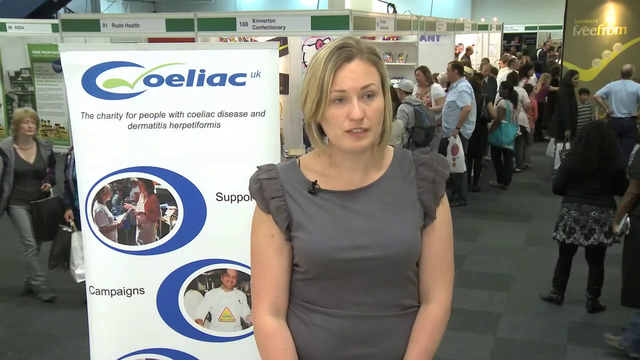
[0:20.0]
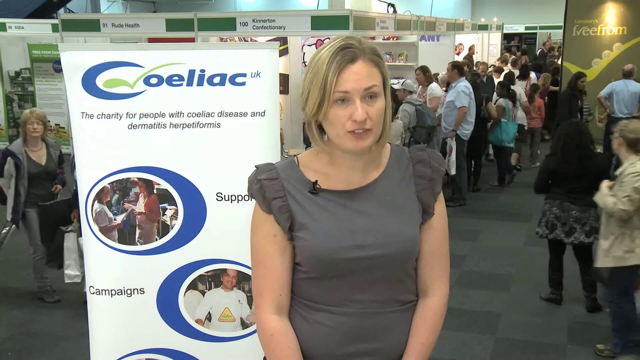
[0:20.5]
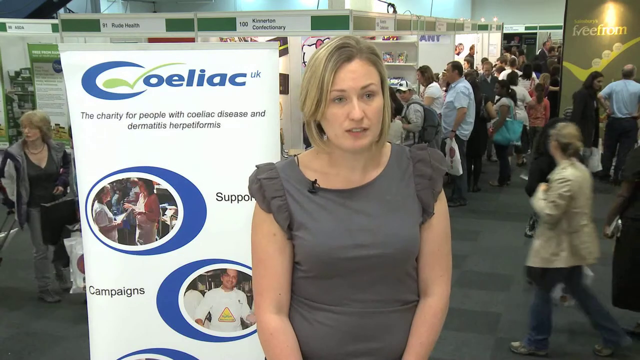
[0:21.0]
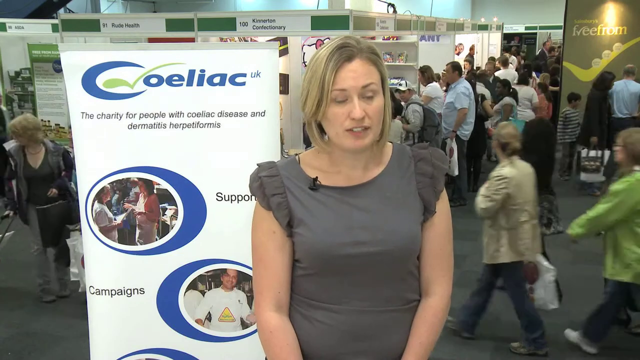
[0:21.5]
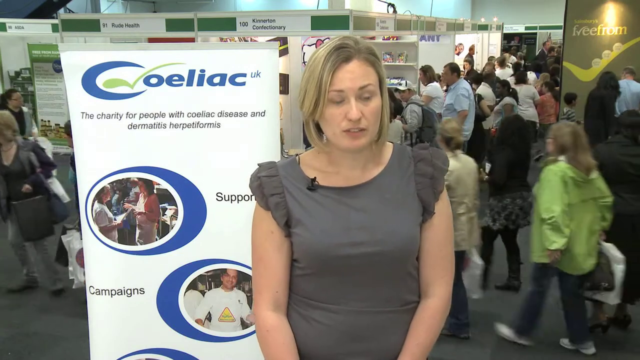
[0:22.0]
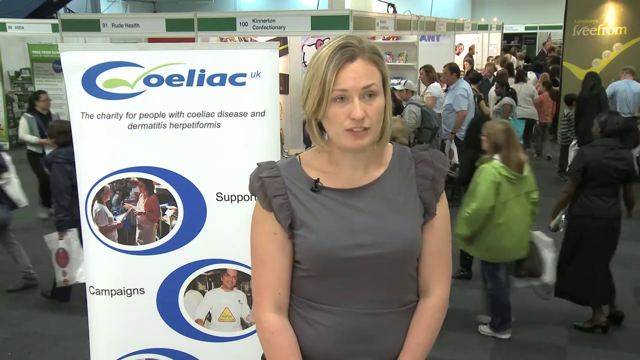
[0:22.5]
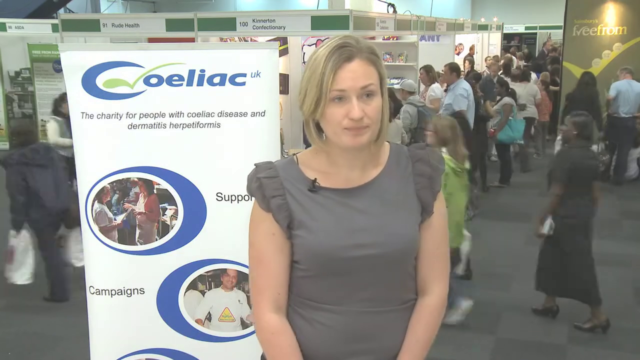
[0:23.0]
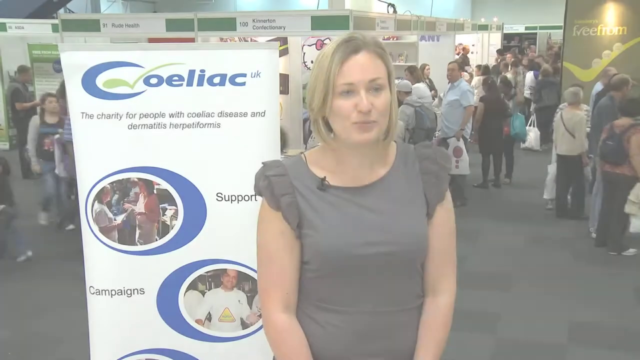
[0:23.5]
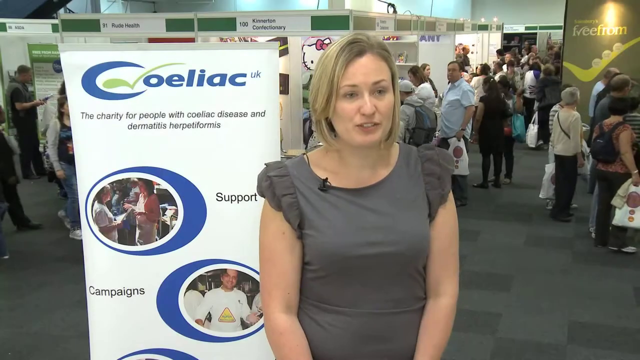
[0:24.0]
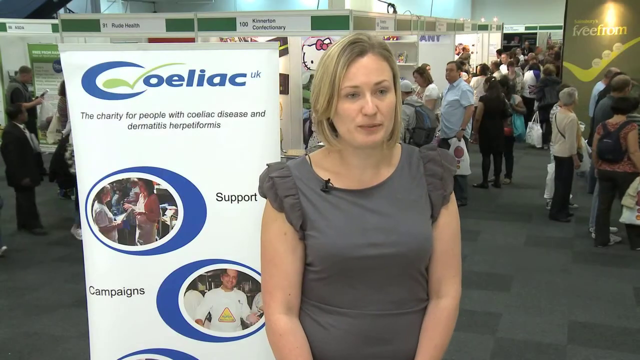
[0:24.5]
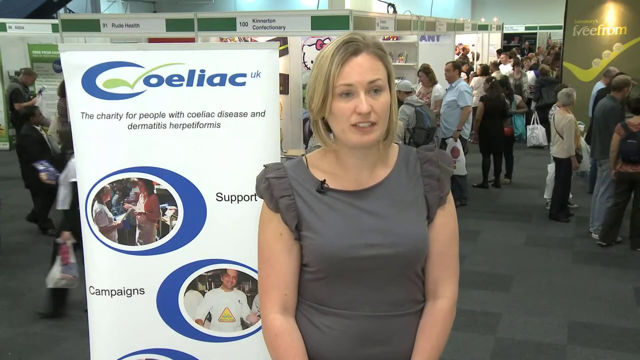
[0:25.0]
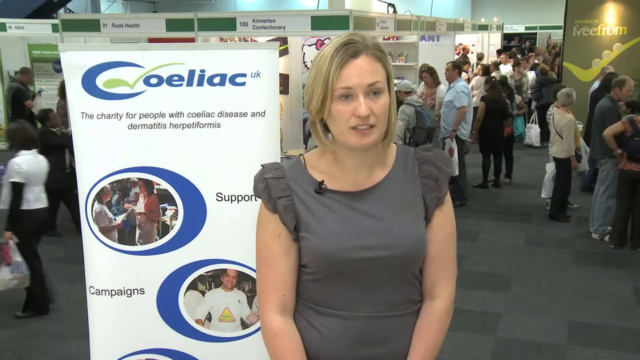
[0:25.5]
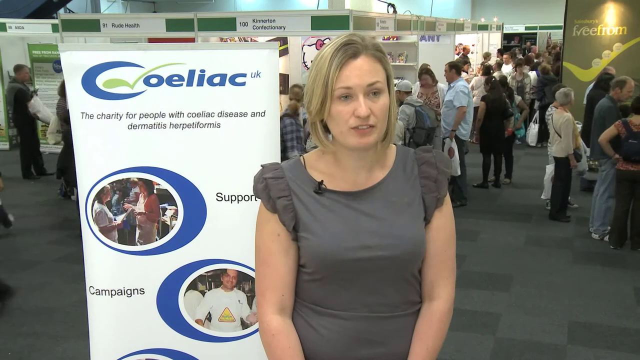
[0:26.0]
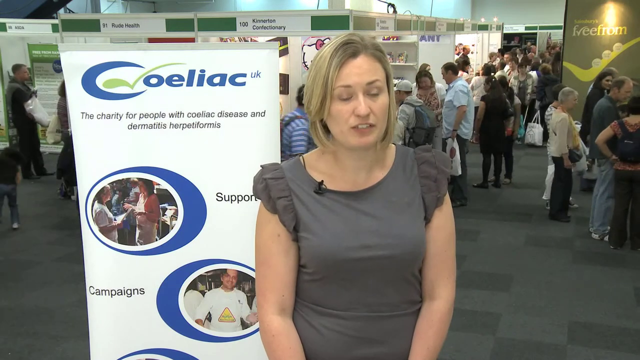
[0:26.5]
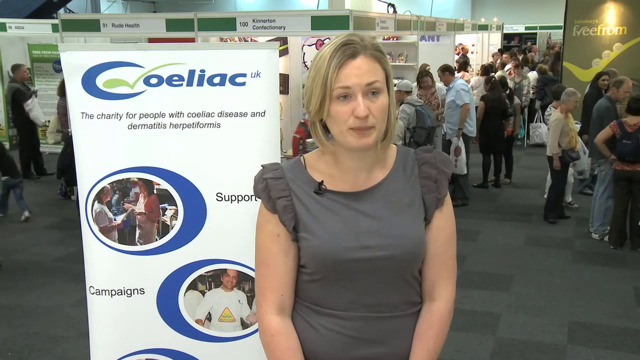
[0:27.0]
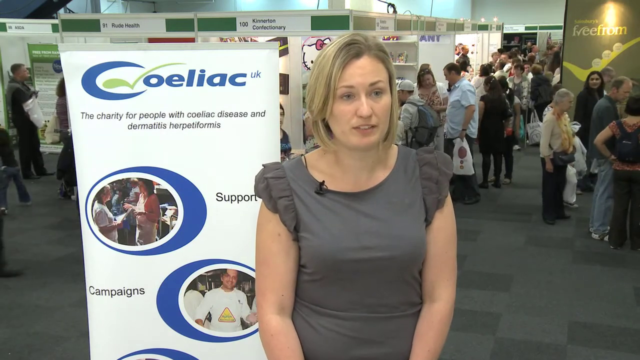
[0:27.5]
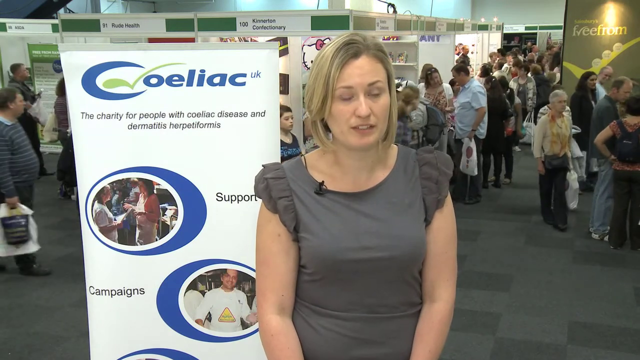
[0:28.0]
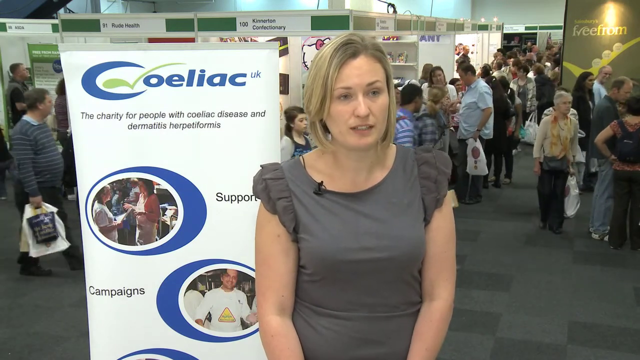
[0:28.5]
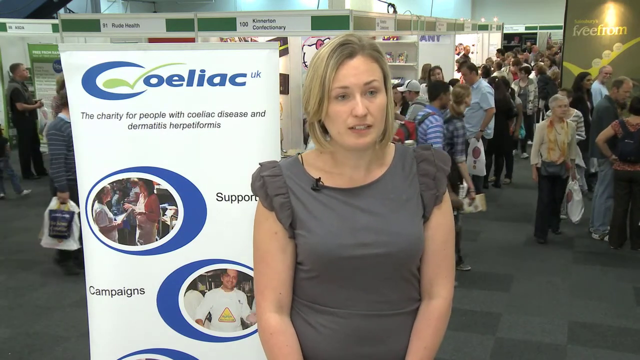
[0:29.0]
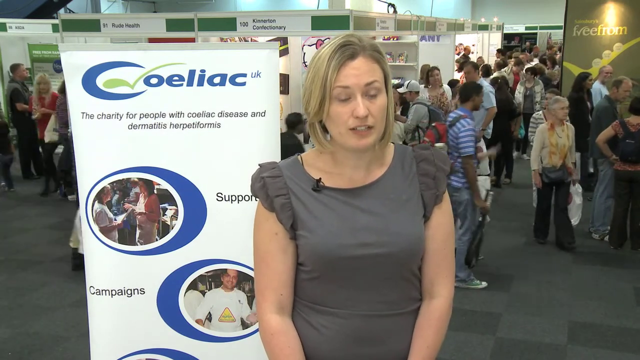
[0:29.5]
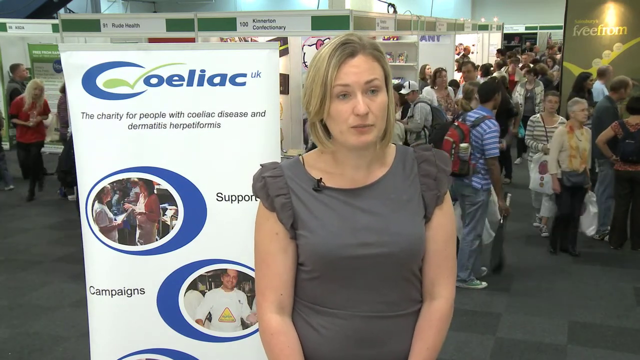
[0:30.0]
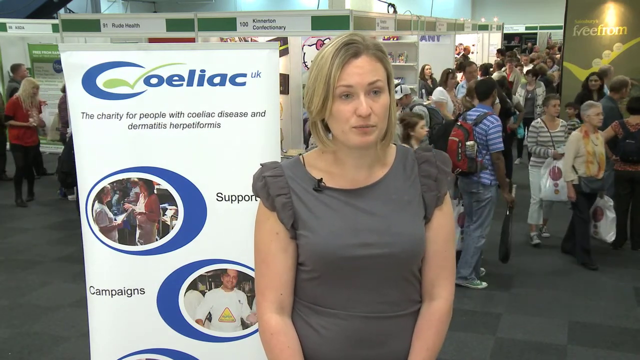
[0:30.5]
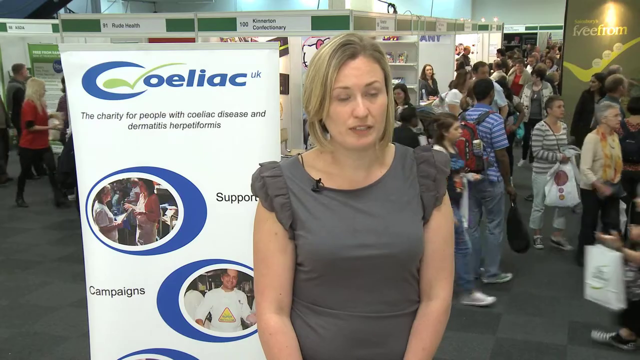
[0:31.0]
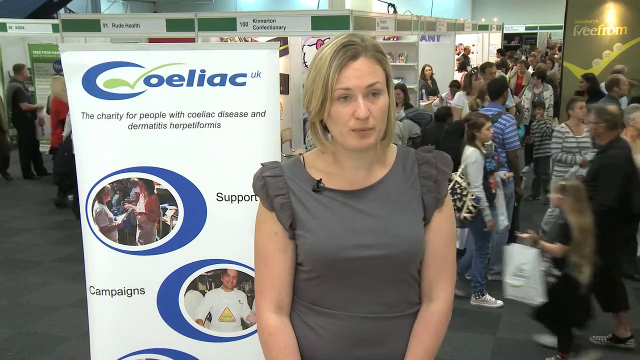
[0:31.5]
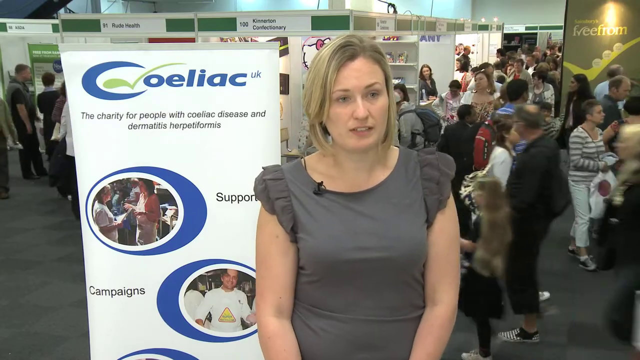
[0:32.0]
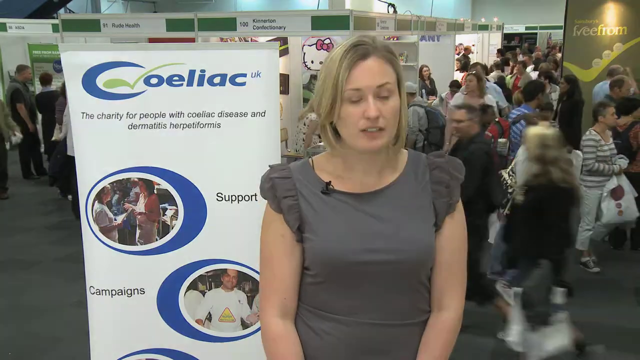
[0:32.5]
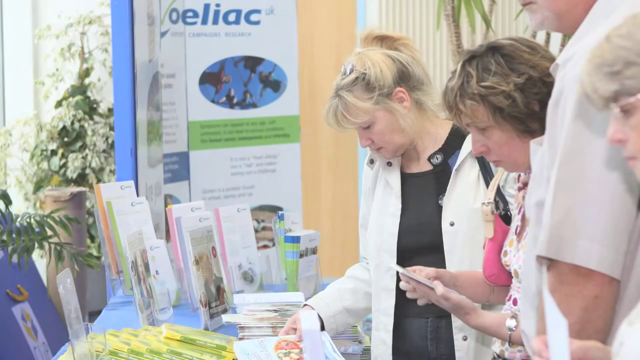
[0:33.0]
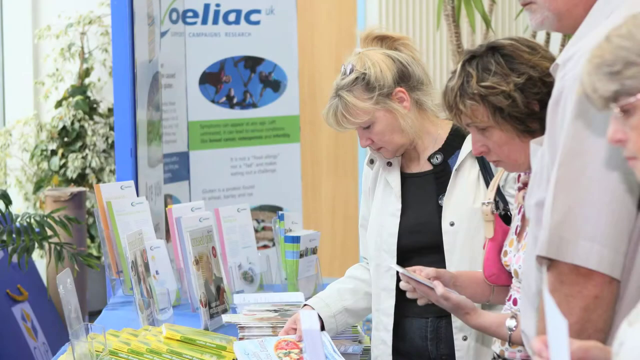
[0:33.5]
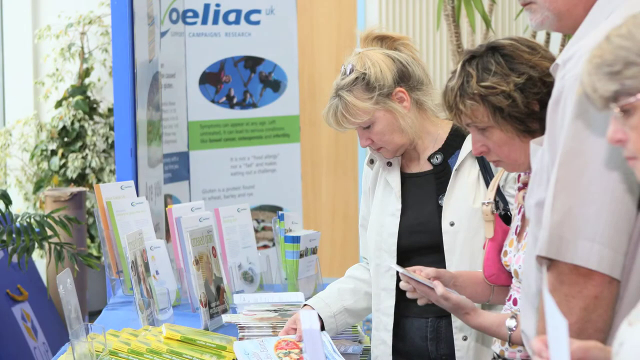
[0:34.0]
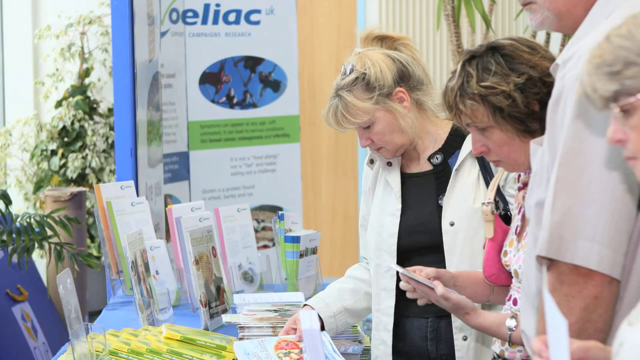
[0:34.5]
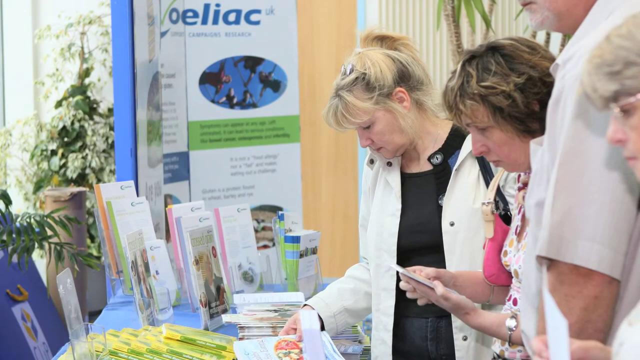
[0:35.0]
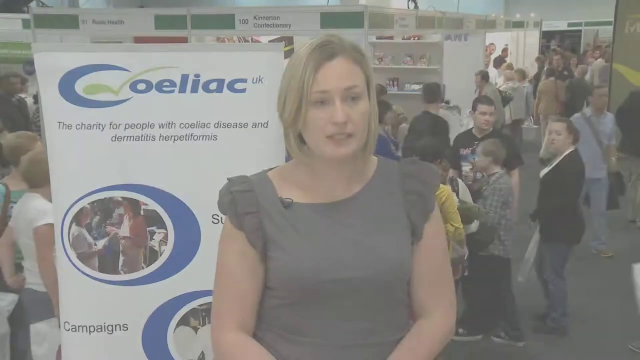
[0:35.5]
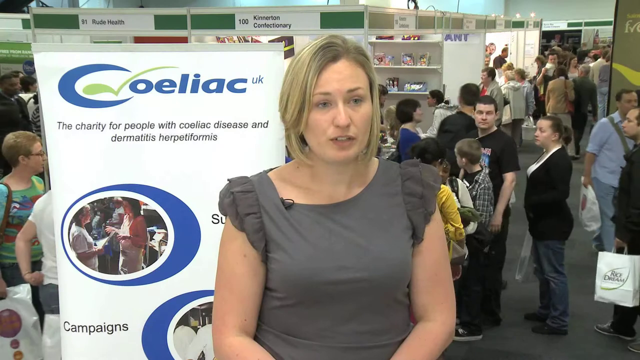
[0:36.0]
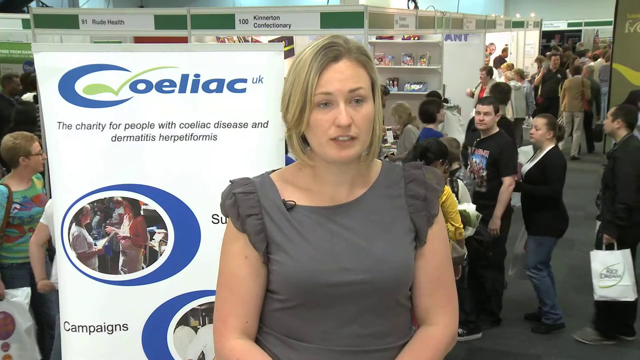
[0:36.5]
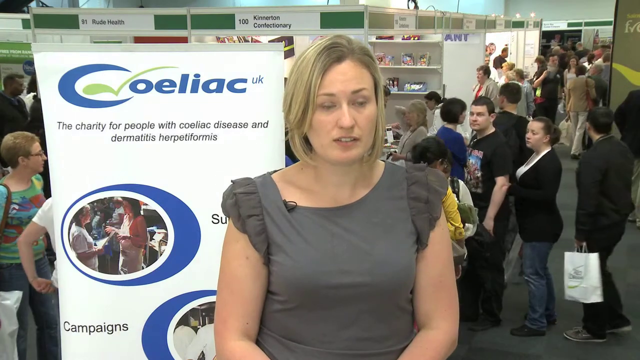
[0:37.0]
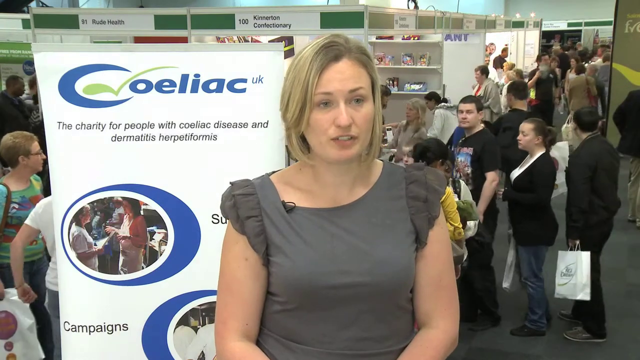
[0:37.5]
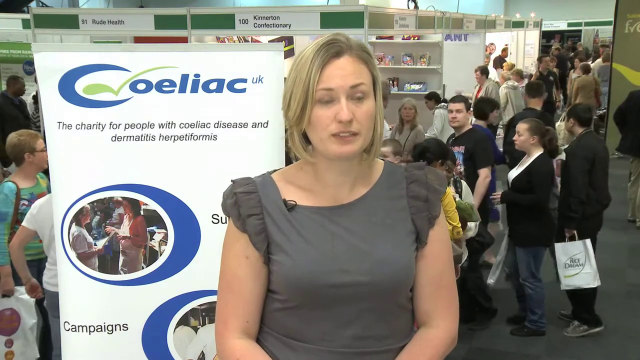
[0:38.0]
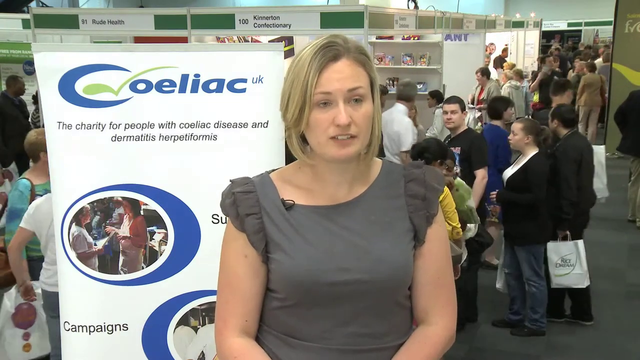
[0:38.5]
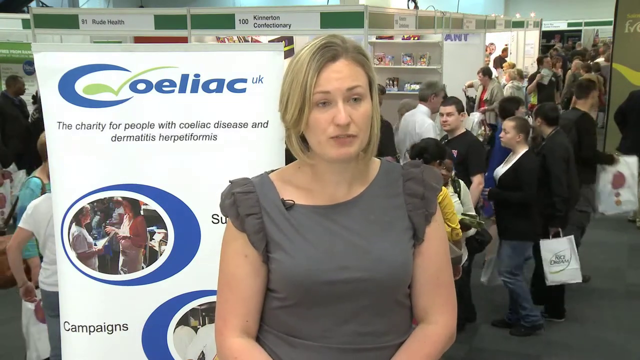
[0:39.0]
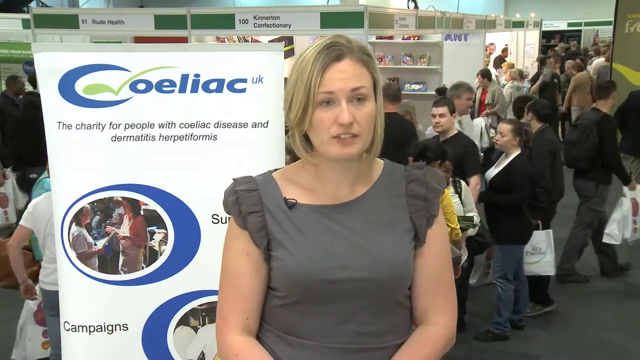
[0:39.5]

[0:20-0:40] The interview with the woman continues; she looks to be part of Coeliac UK, and the sign behind her reads "the charity for people with Coeliac disease and Dermatitis Herpetiformis." The setting looks like a convention-style room, with various people behind her, apparently other booths and people seeking out information. People walk around in the background, many carrying different bags and backpacks. The video cuts to a still image of what looks to be several people at the Coeliac booth or information center, all picking up various pamphlets and looking through the information, before cutting back to the woman being interviewed.